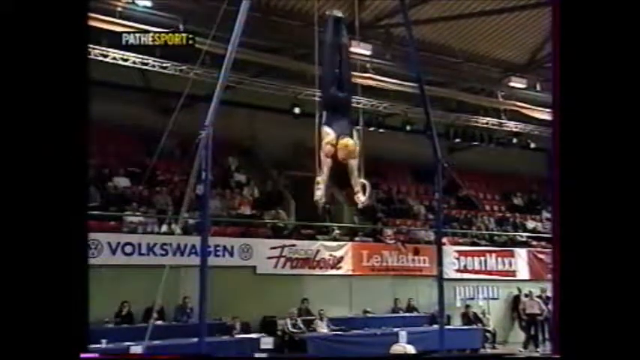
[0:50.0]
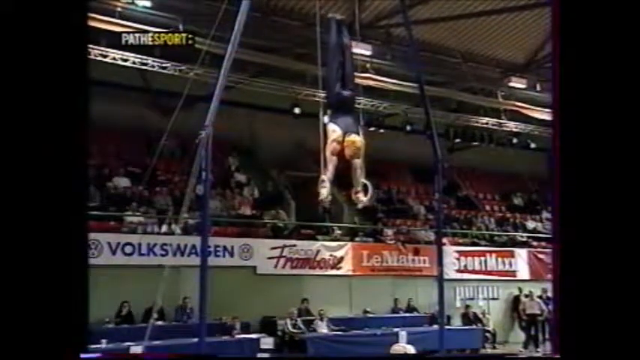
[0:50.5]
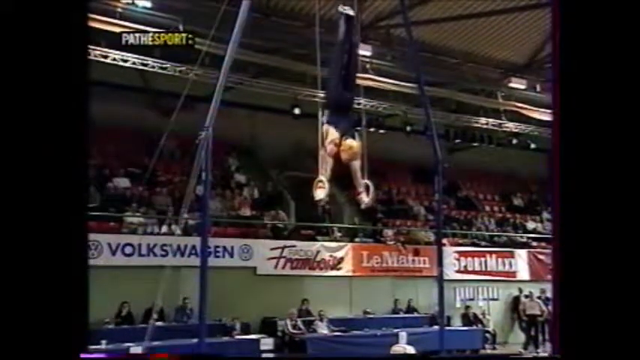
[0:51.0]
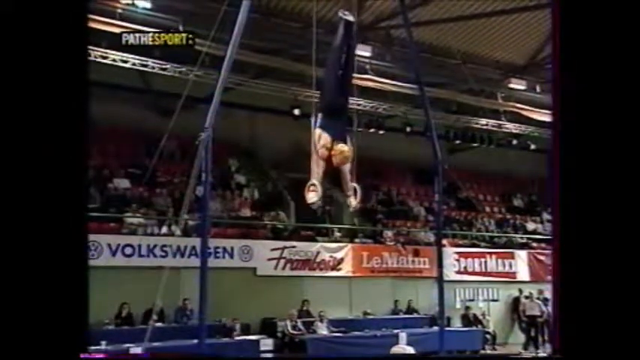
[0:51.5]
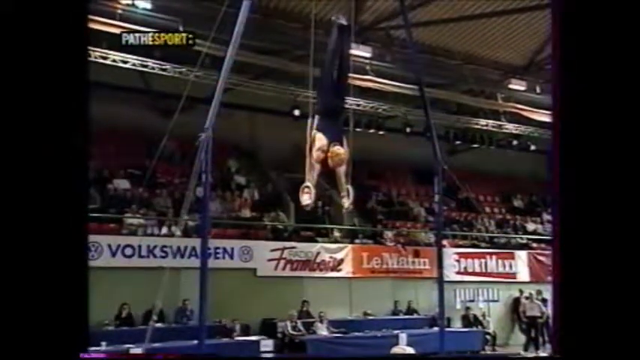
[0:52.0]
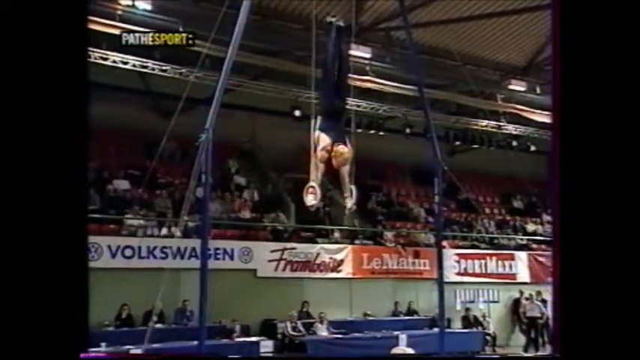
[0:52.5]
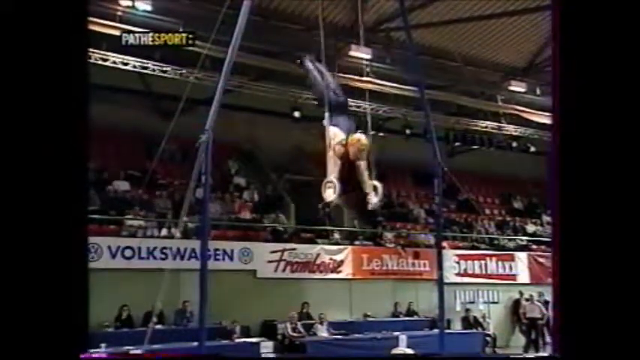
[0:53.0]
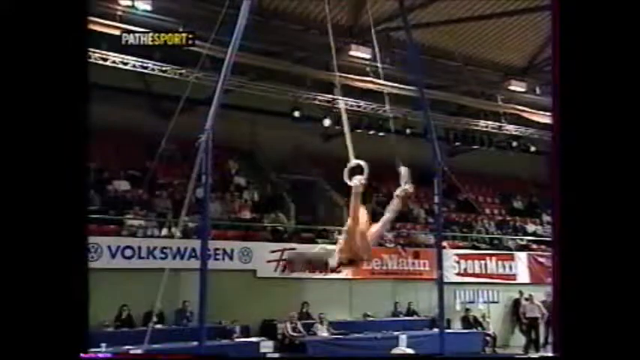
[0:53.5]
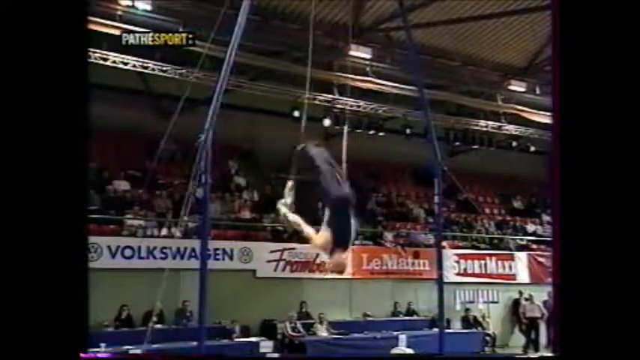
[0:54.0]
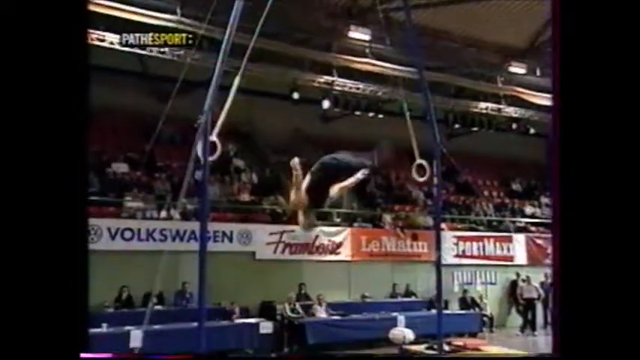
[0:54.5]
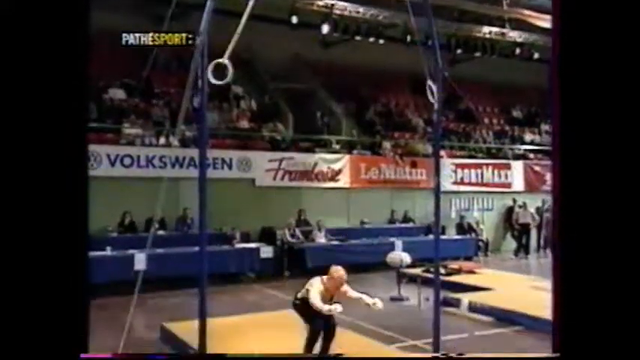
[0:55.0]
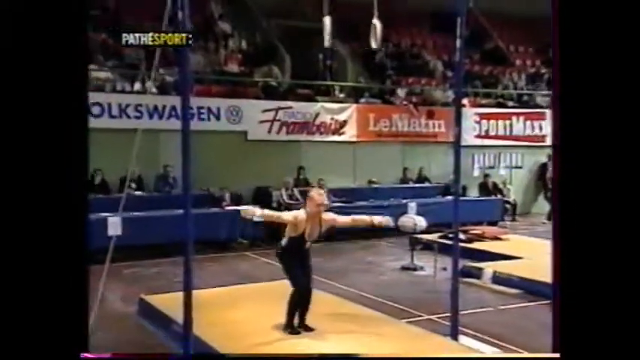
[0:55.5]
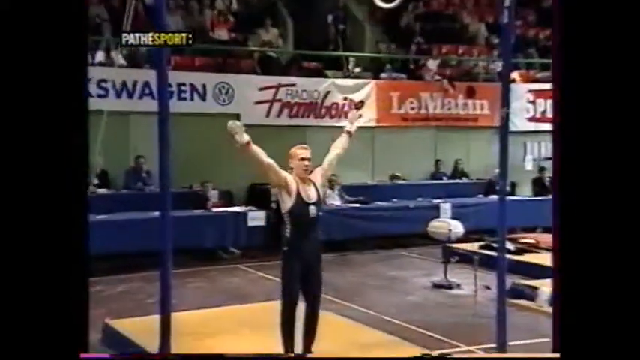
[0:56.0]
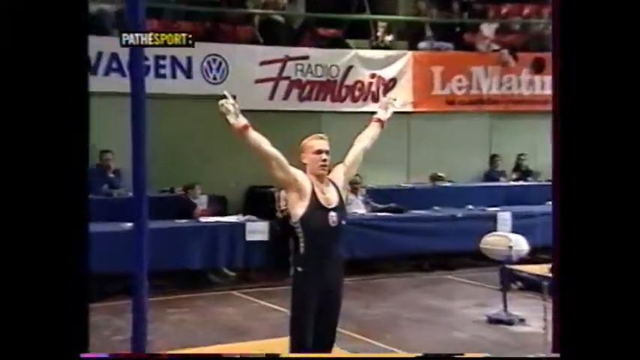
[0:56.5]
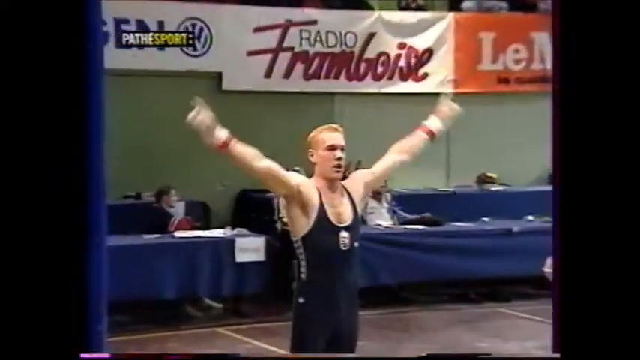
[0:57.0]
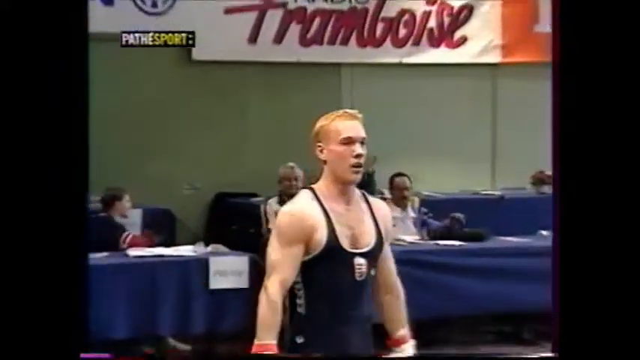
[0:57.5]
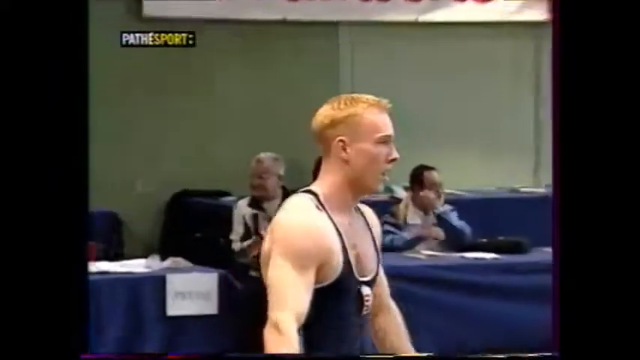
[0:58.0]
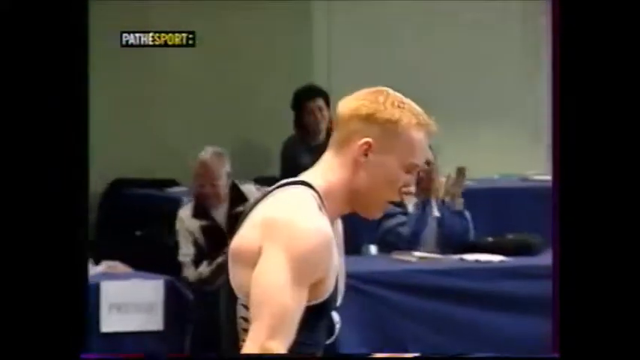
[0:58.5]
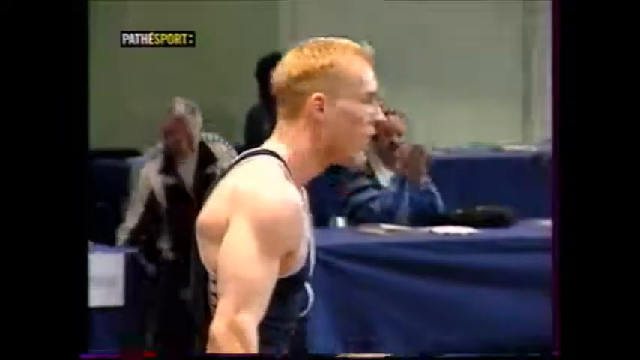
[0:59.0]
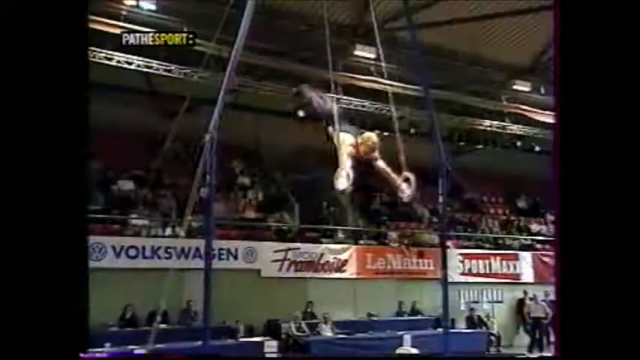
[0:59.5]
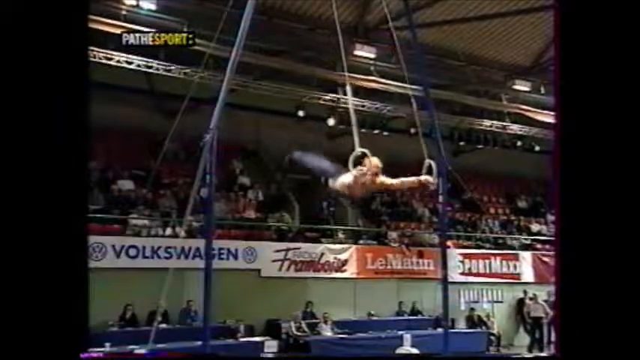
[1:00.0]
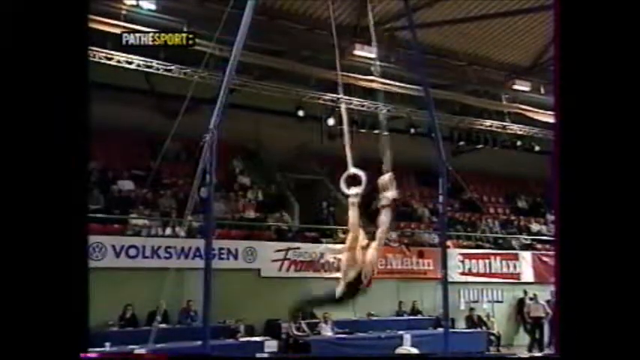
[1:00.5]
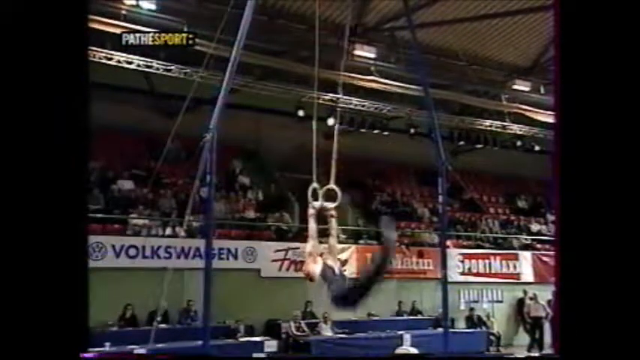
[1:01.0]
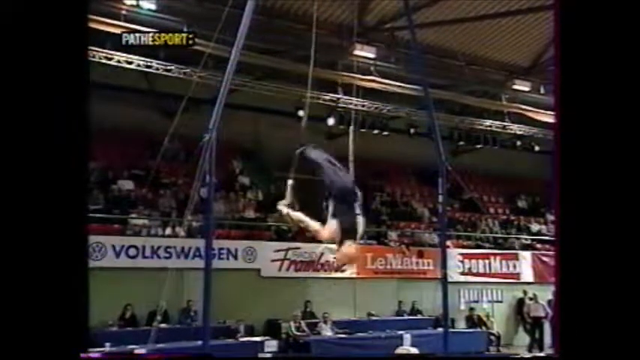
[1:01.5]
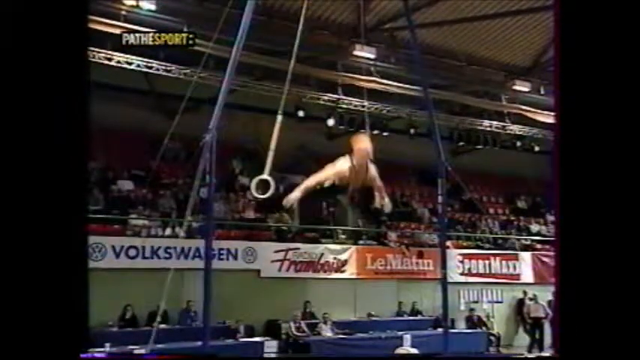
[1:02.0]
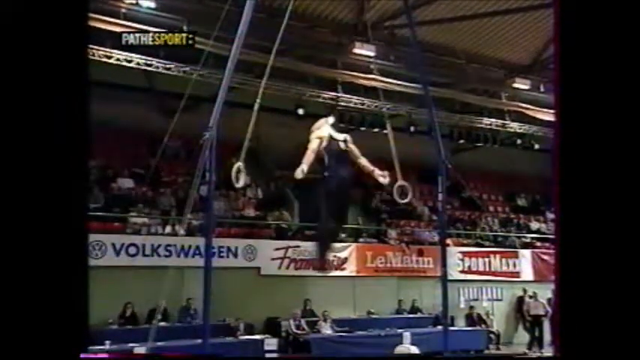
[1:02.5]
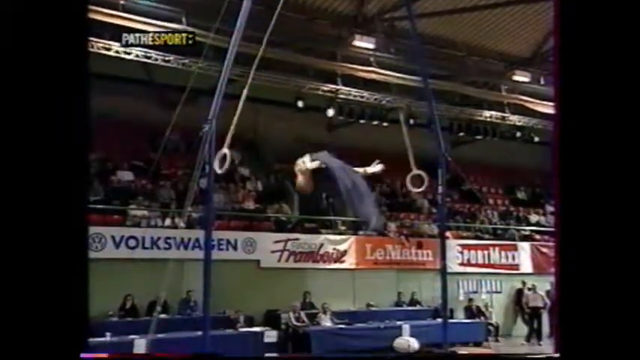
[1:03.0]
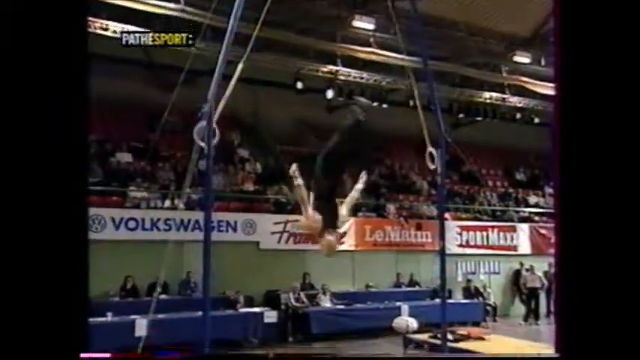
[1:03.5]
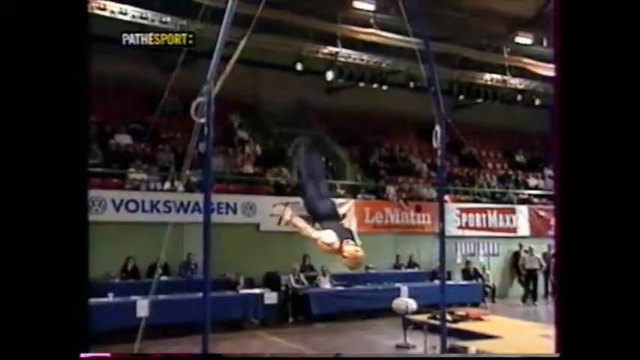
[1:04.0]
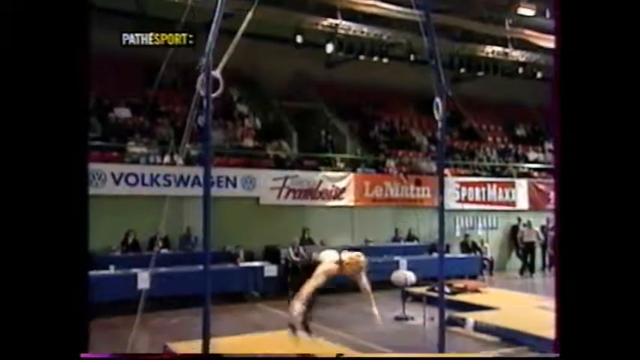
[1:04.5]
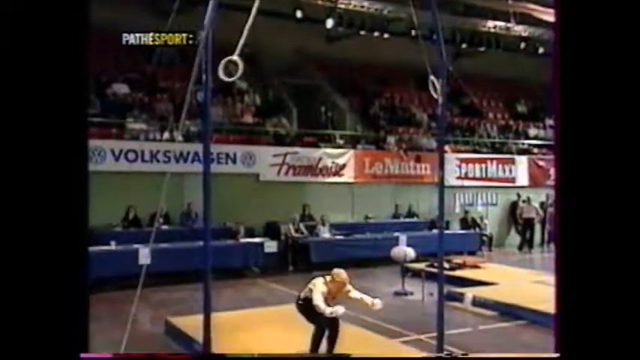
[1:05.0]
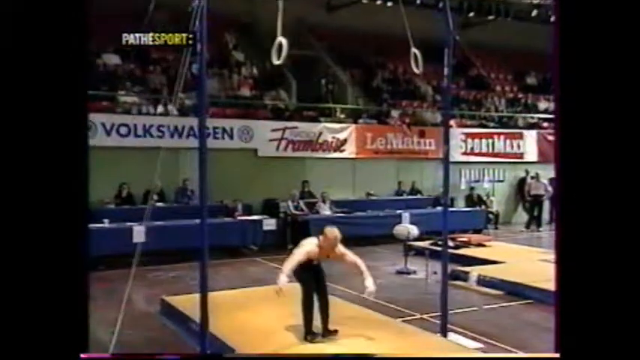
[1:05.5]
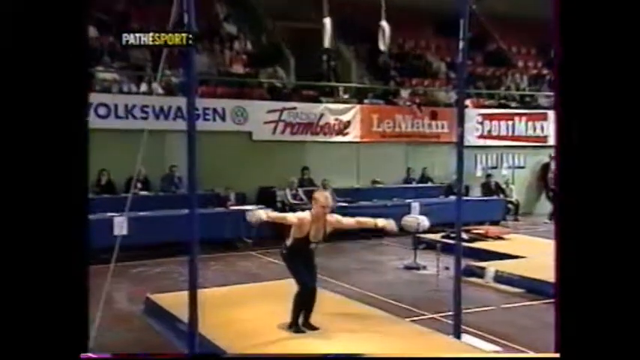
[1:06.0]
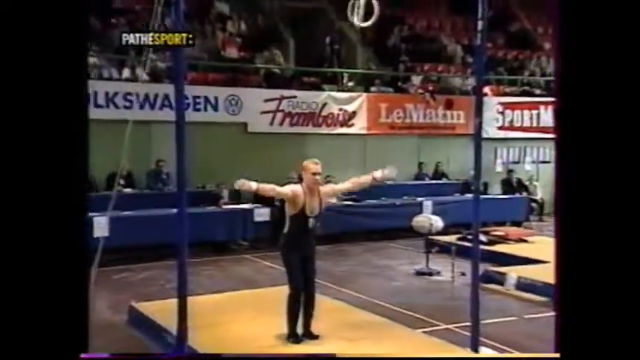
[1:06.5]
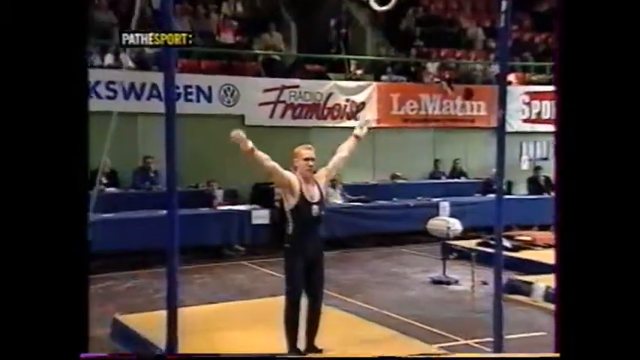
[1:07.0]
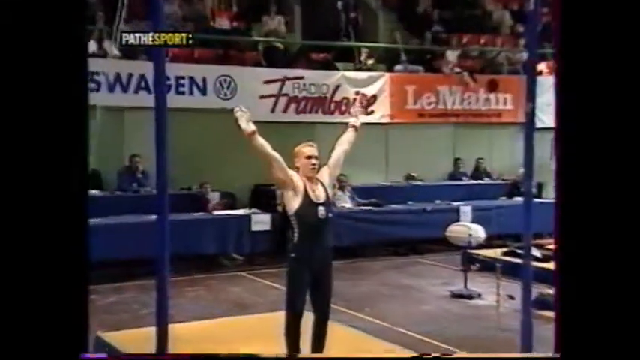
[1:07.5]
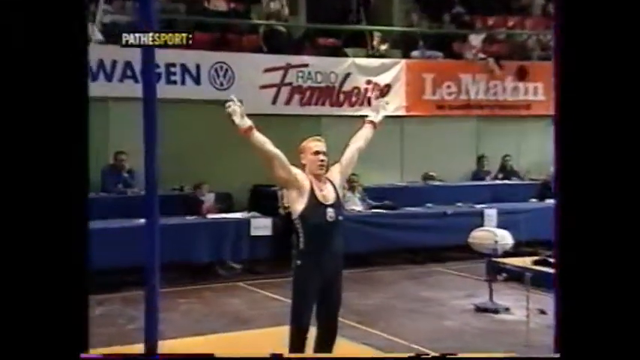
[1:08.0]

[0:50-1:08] The same gymnast, a Caucasian male in his early 20s with red blondish hair, starts on the rings, doing something like a handstand while holding them, legs straight up, his arms supporting him and his muscles bulging. He drops his legs and swings down, just holding the rings with his legs closer to the ground, absolutely straight. He swings back up, does a flip, lands, bobbles, and steps back once, then puts his arms up to finish the routine, breathing deeply. The judges clap and he bows a bit. The video then replays the entire sequence in slow motion: he swings around, goes down, and lands without fully sticking it, wobbling one step back and putting his arms up in a V shape. The video ends there.